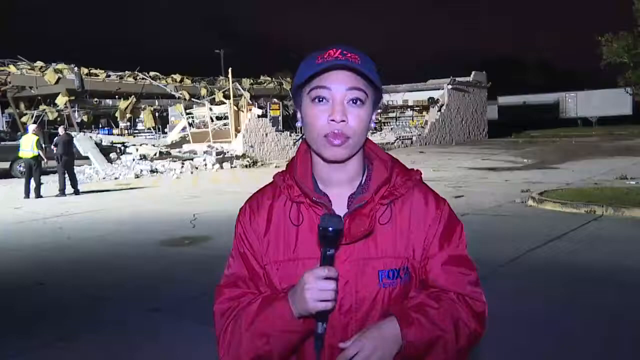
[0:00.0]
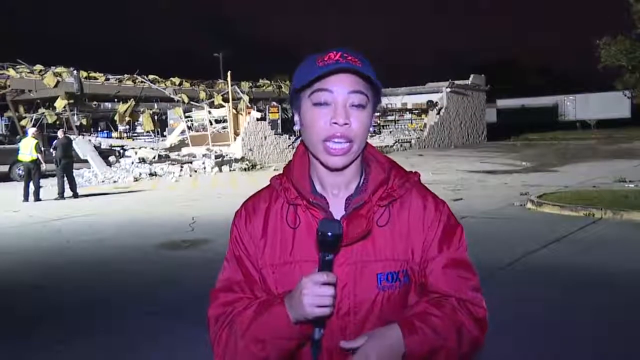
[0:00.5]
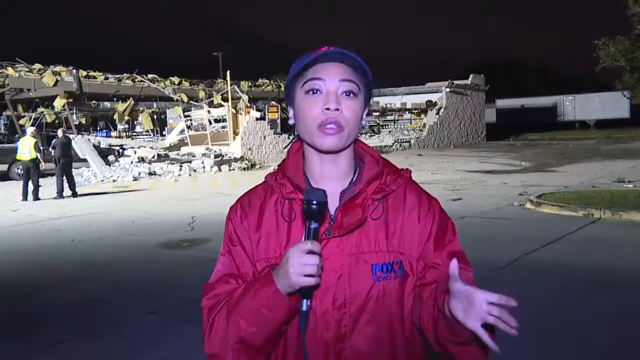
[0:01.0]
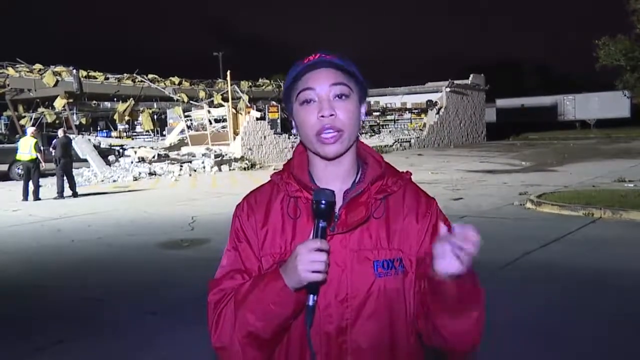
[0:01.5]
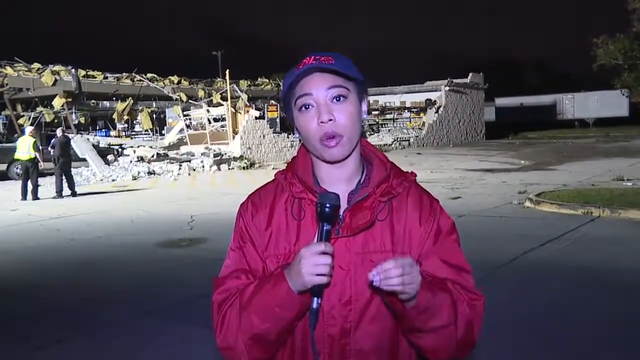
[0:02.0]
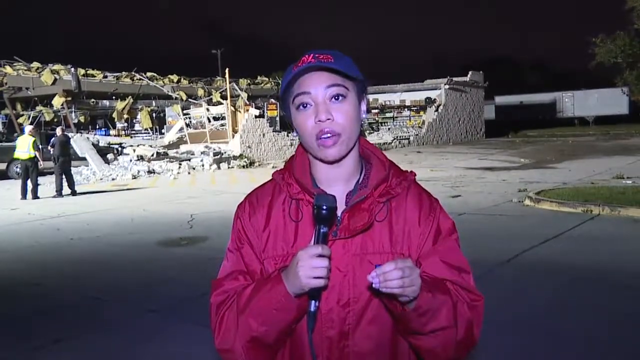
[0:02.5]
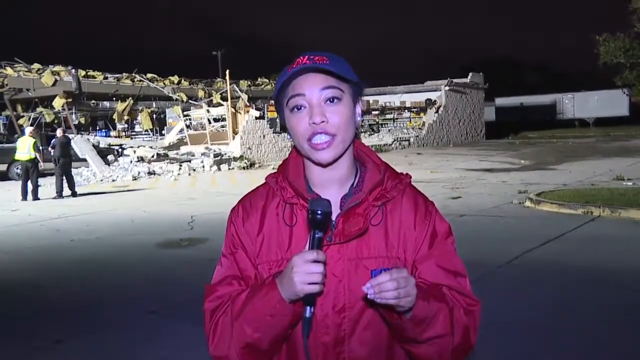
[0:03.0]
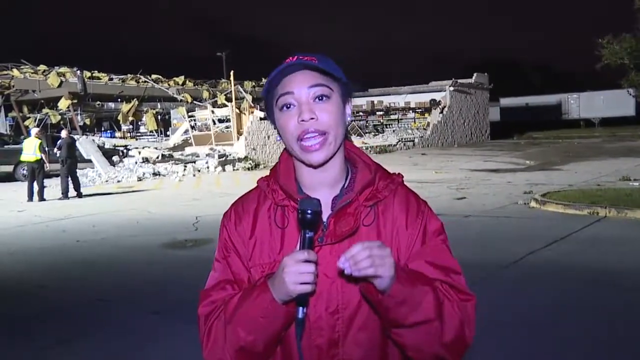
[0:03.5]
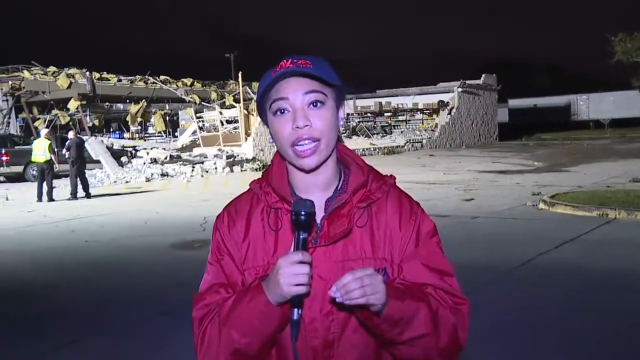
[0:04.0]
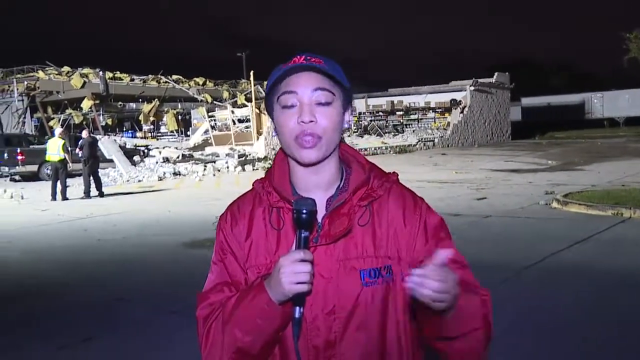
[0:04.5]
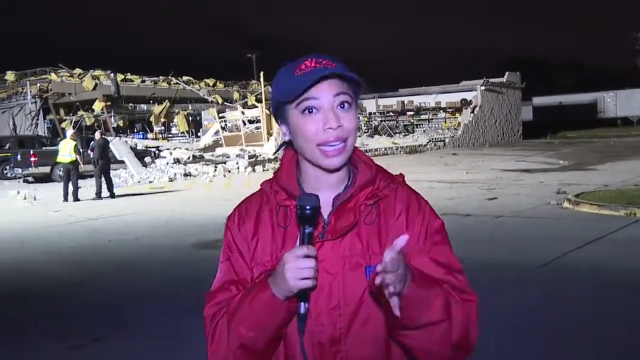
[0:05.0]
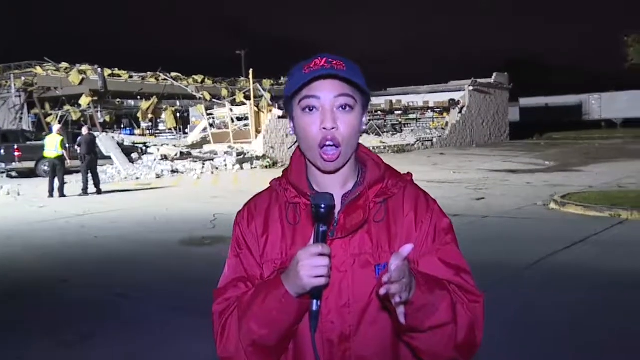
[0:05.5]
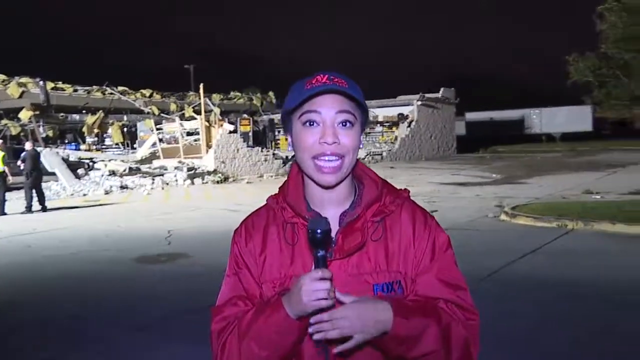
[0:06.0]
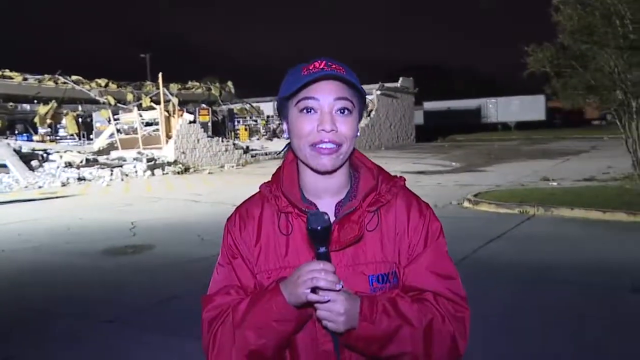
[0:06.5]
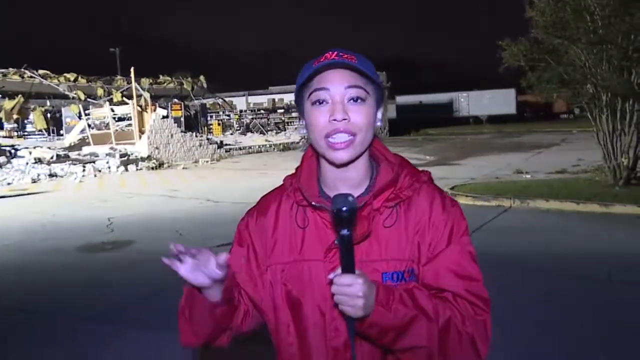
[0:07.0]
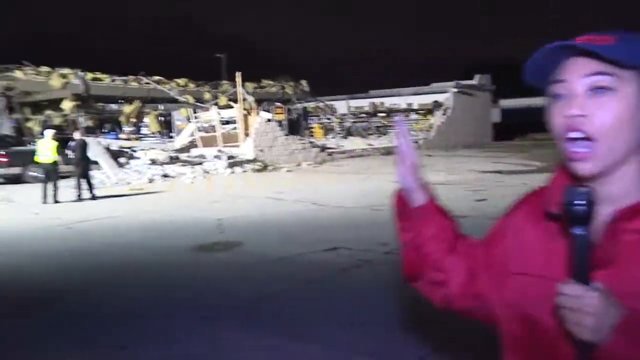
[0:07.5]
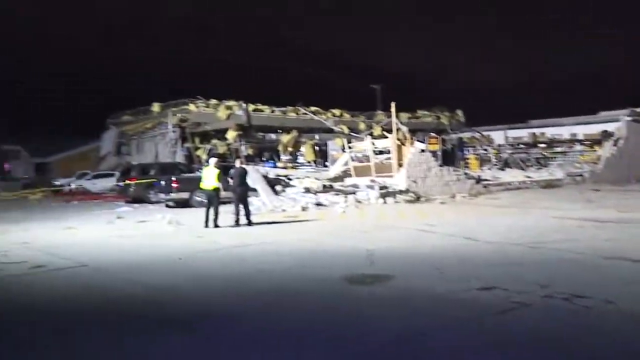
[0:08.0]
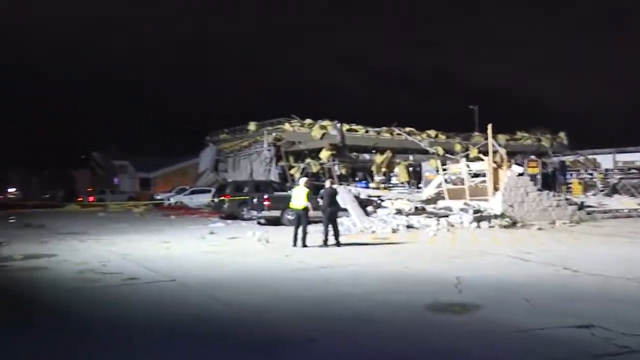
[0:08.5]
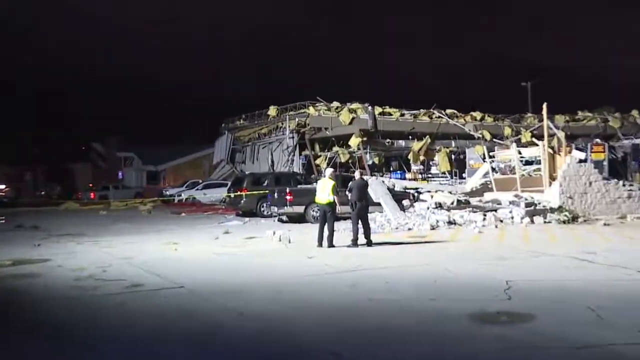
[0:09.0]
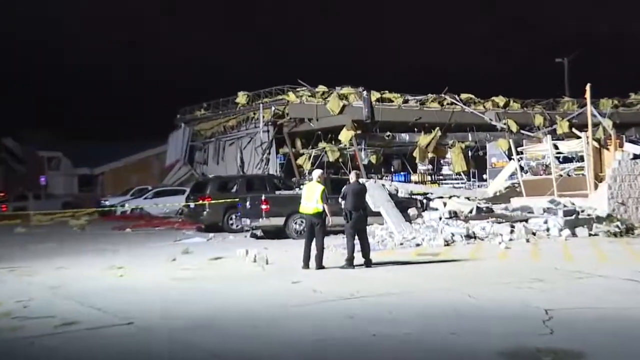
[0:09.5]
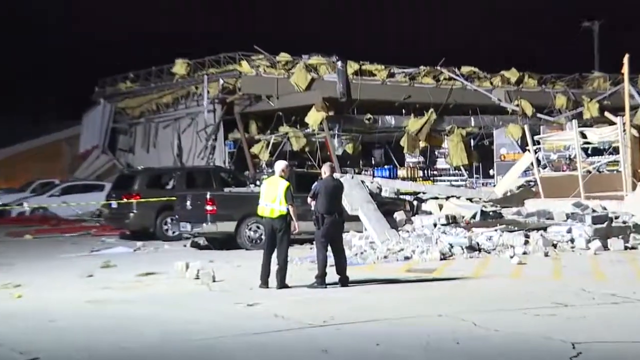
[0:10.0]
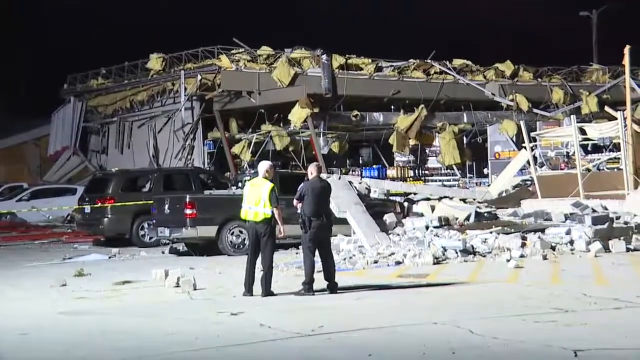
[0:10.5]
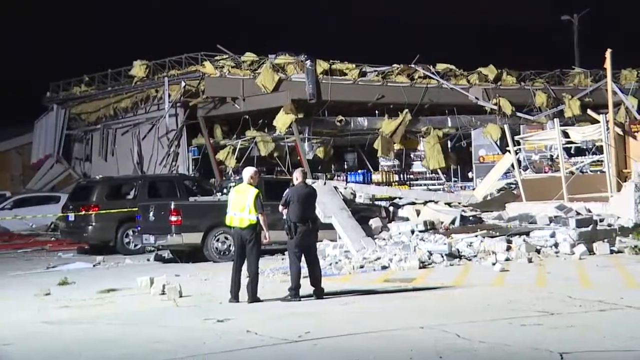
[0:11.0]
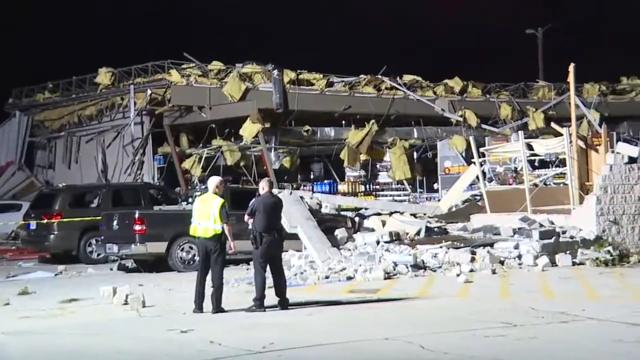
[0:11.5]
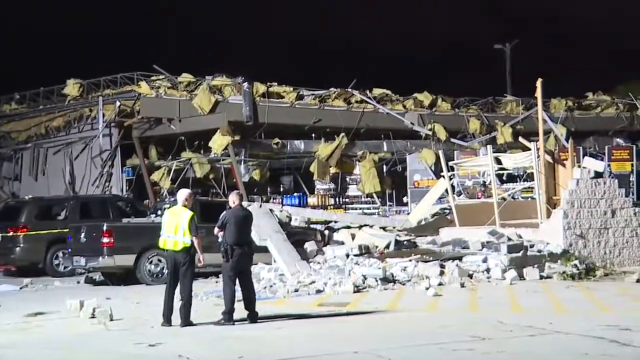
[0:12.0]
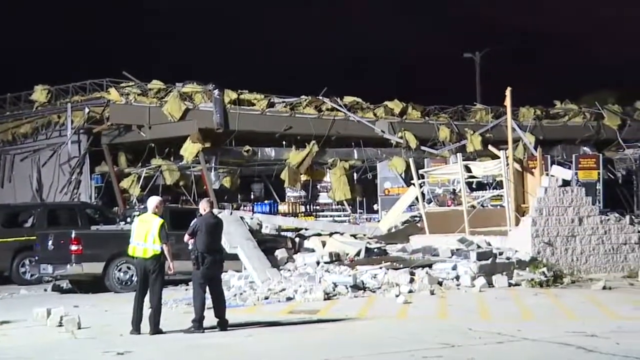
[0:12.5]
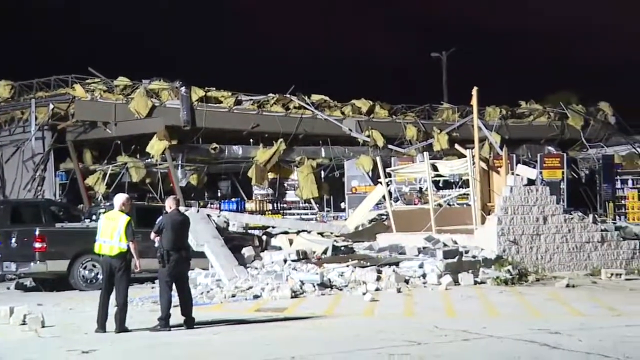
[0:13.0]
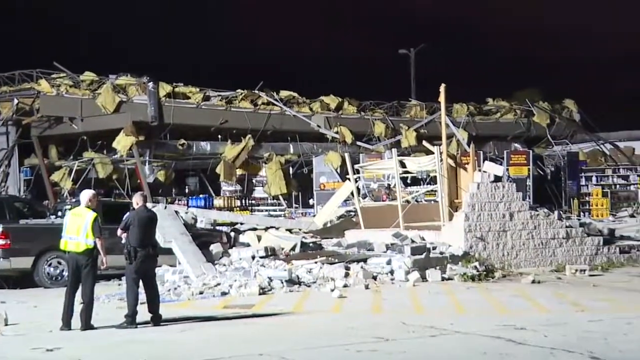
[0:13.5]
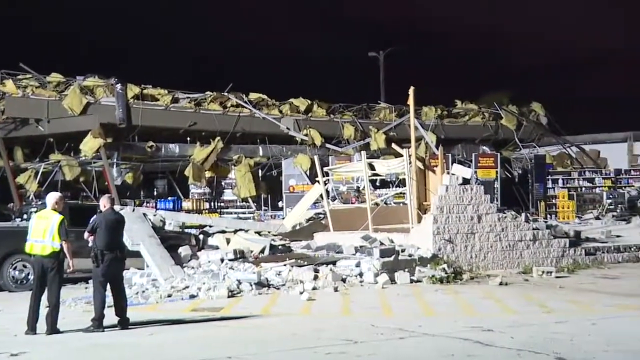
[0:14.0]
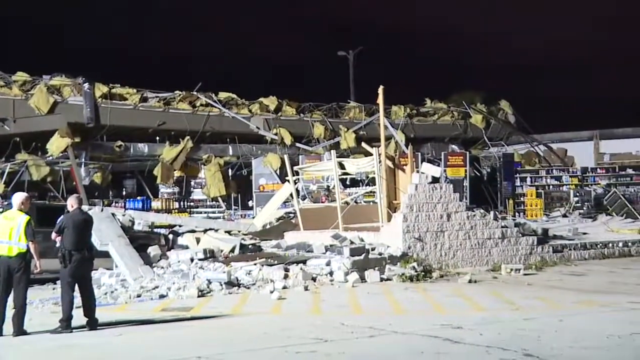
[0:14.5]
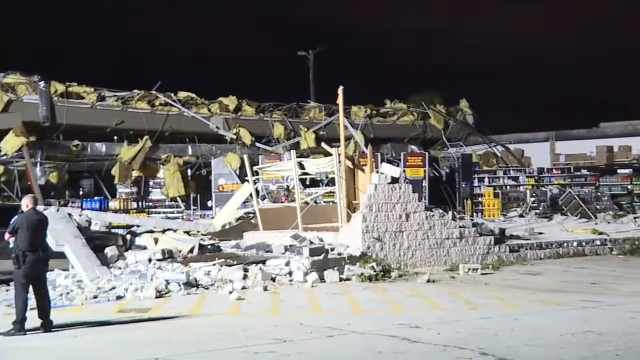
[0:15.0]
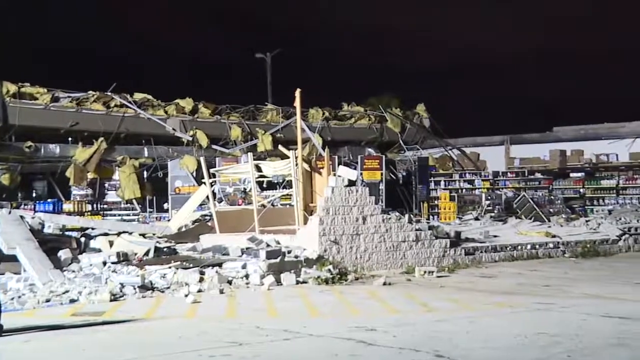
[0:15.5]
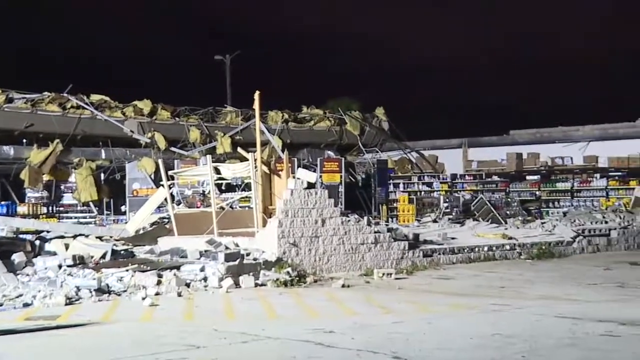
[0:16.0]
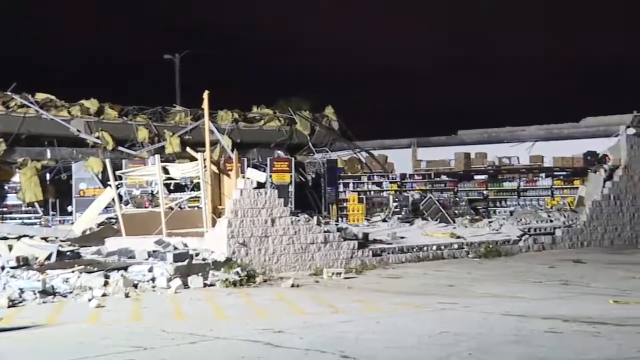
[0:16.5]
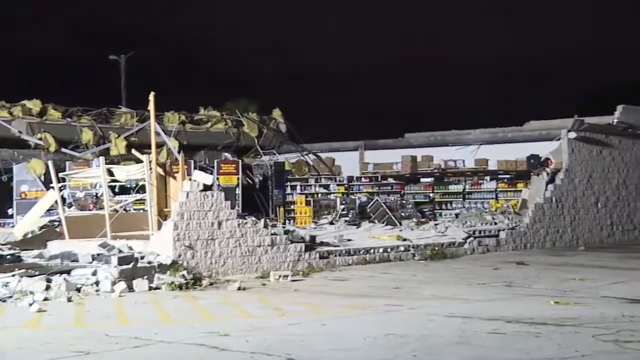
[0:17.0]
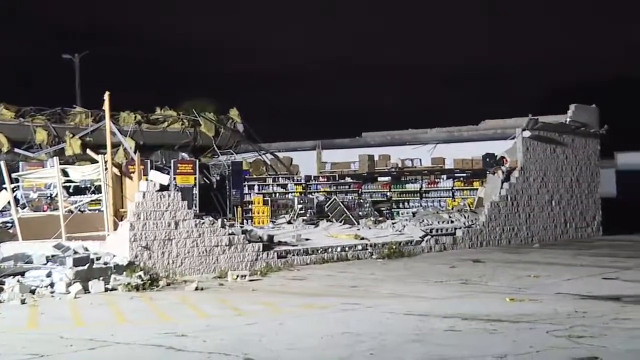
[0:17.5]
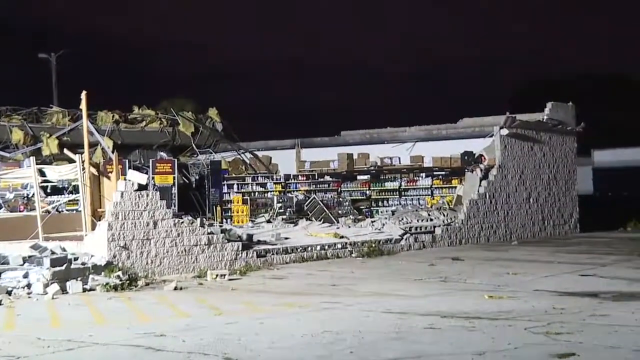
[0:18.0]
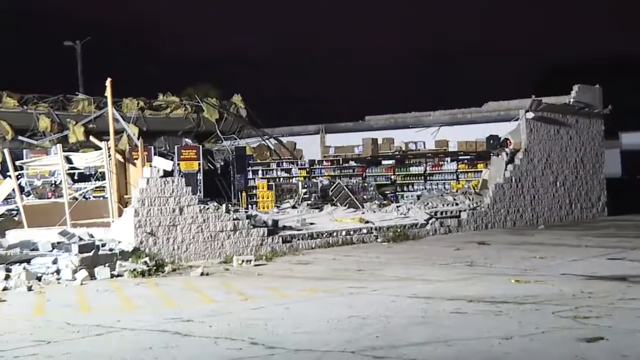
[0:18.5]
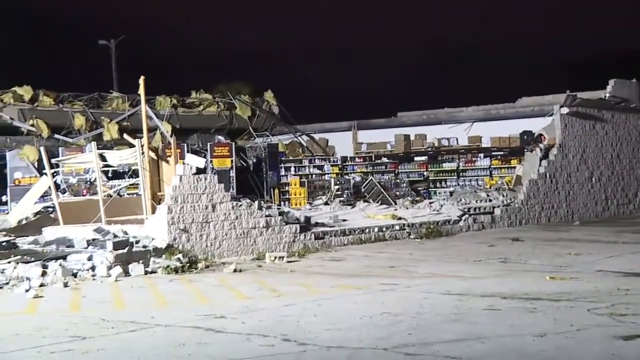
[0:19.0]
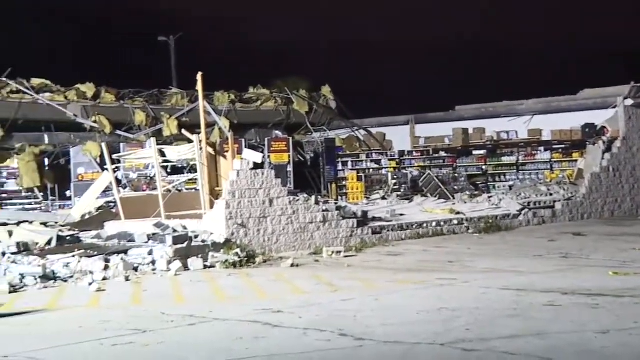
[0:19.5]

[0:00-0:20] What appears to be a Fox News broadcast from a local Fox affiliate shows a structure damaged by a storm, apparently a tornado. The building appears to be some sort of grocery store or convenience store. Its brick walls have totally fallen down and there is not much of a ceiling left, while on the far end of the store products are still stacked on the shelves. The broadcast journalist appears to be an African-American woman wearing a lot of makeup, with a lot of lipstick on her very full lips, and two pearl earrings. She wears a blue Fox News baseball cap that apparently says "Fox 23", though it is not perfectly visible. She holds a microphone and wears a red parka with "Fox 23 news" on the chest area.